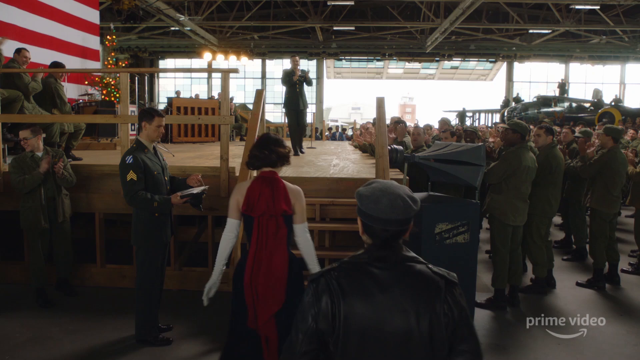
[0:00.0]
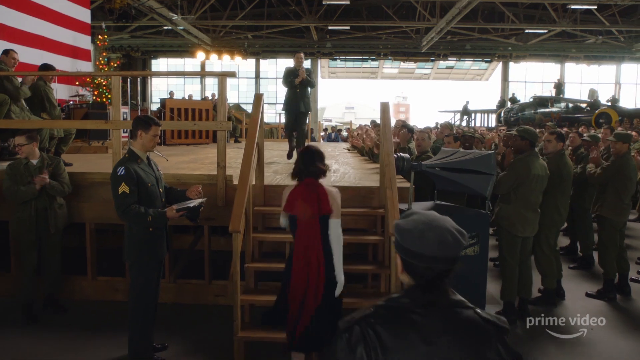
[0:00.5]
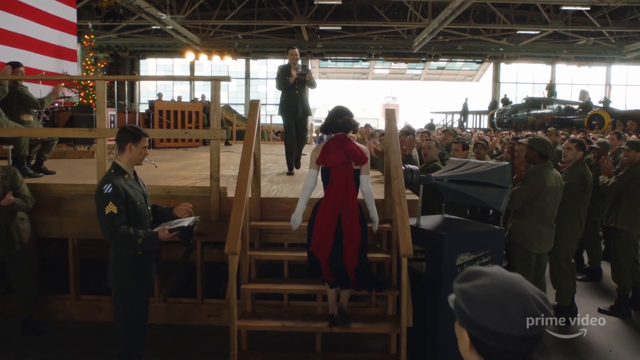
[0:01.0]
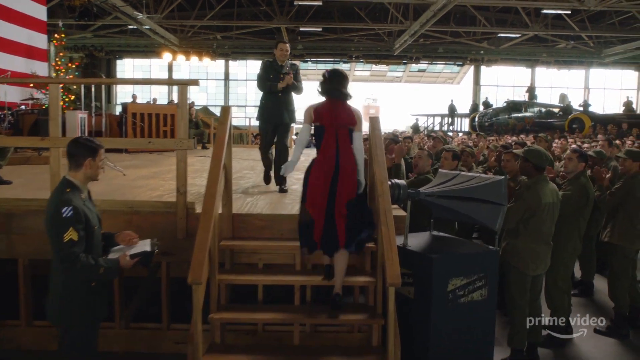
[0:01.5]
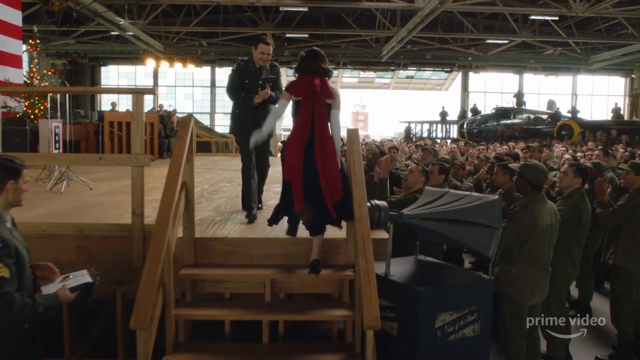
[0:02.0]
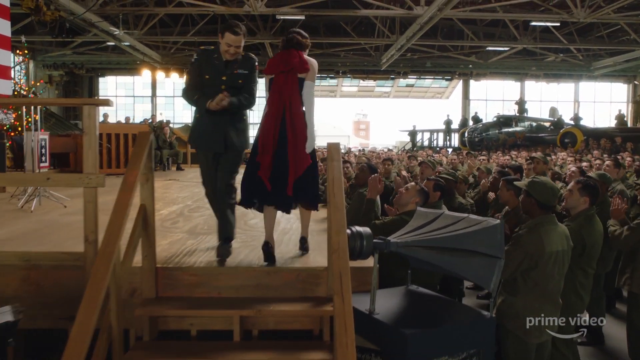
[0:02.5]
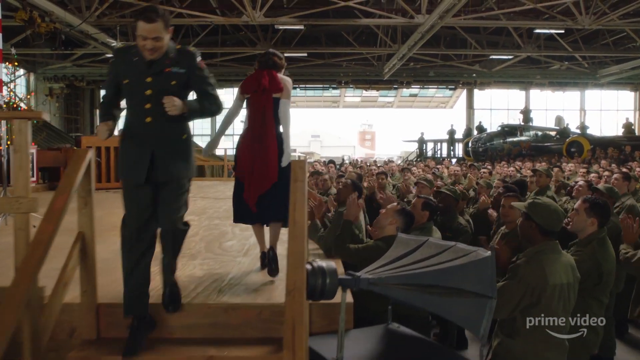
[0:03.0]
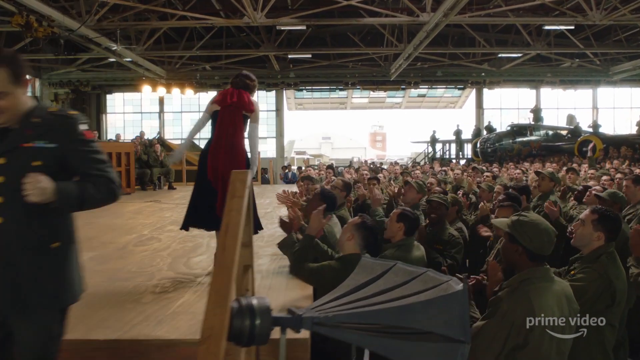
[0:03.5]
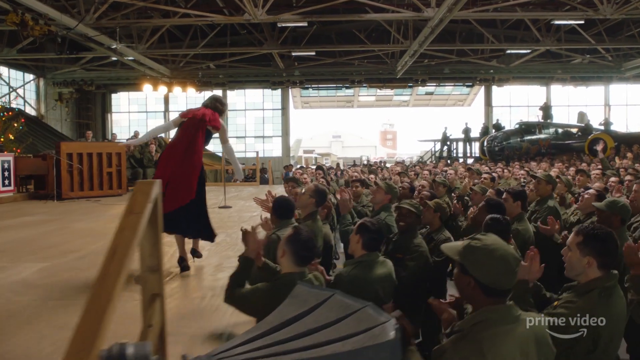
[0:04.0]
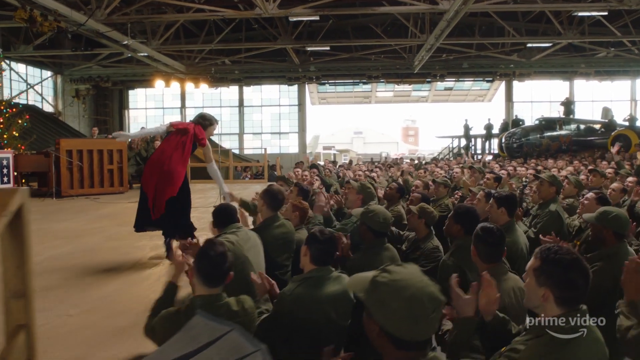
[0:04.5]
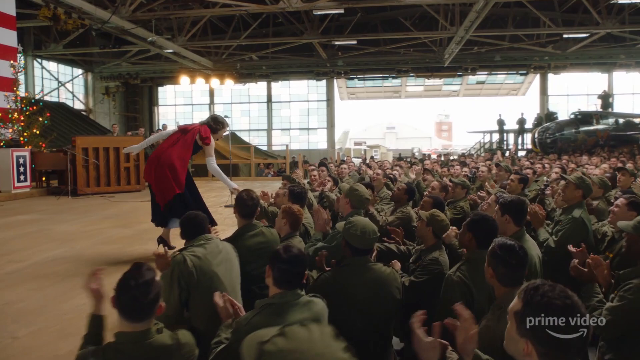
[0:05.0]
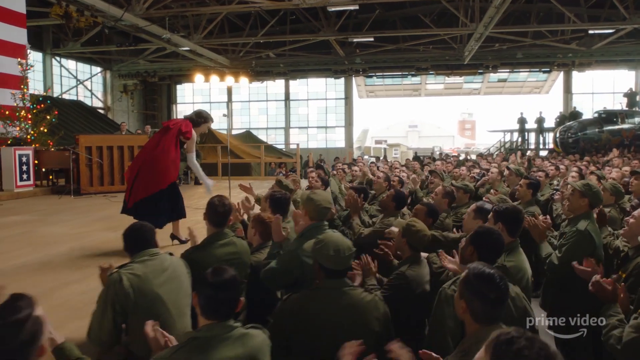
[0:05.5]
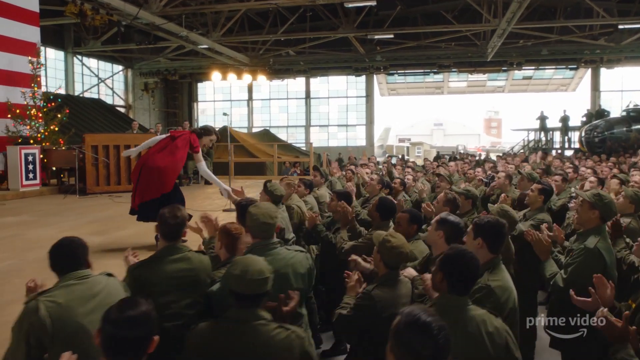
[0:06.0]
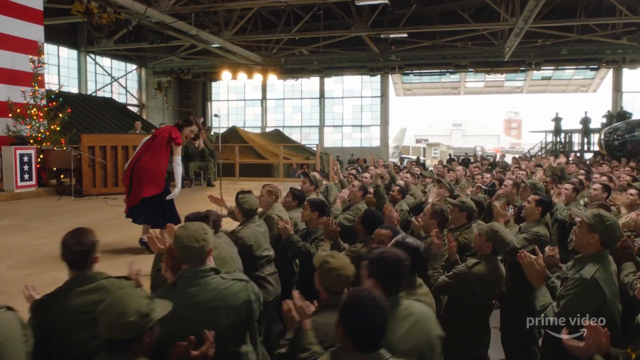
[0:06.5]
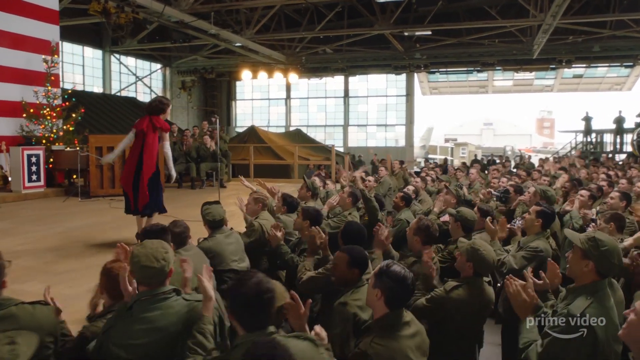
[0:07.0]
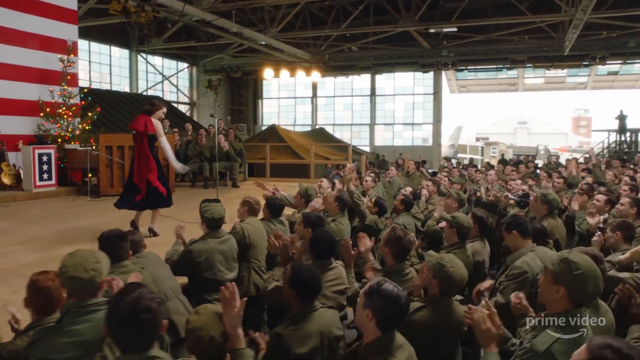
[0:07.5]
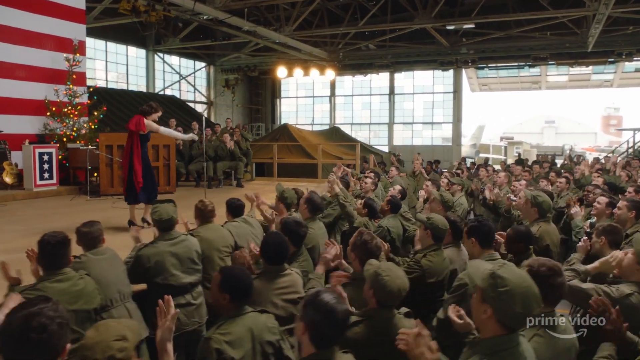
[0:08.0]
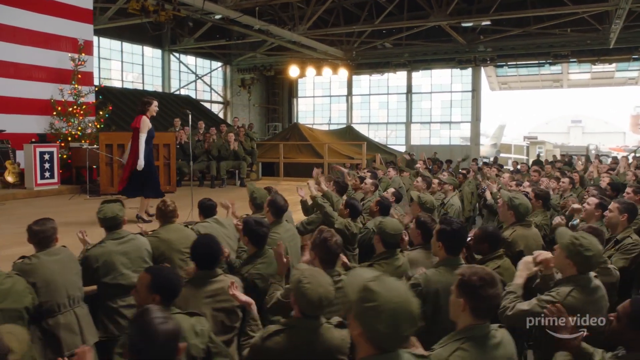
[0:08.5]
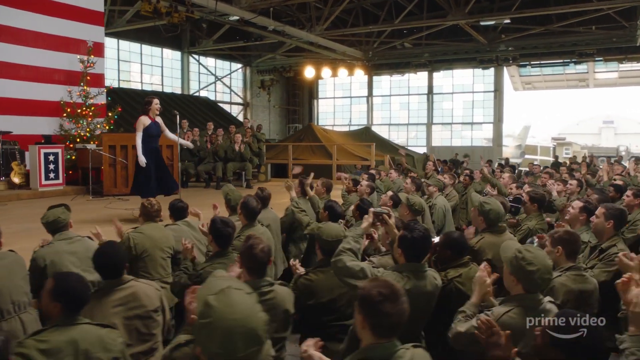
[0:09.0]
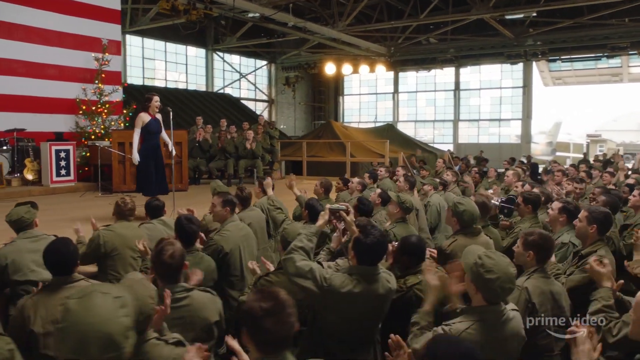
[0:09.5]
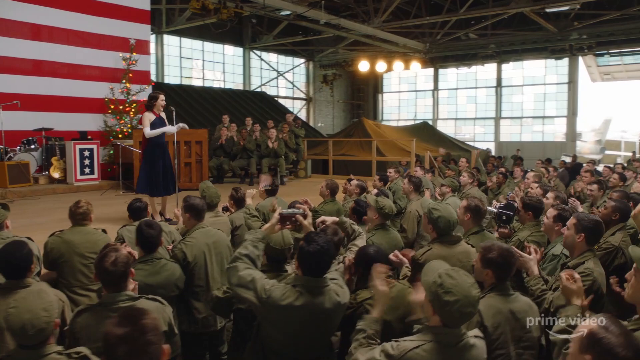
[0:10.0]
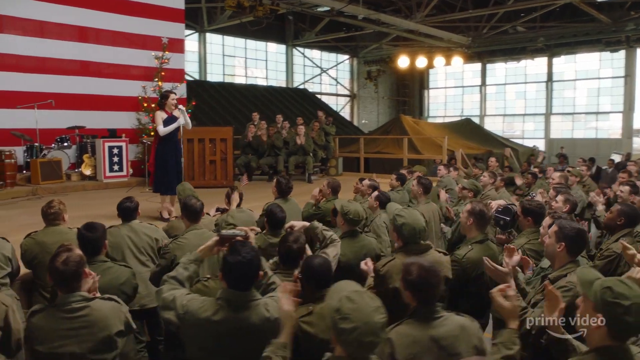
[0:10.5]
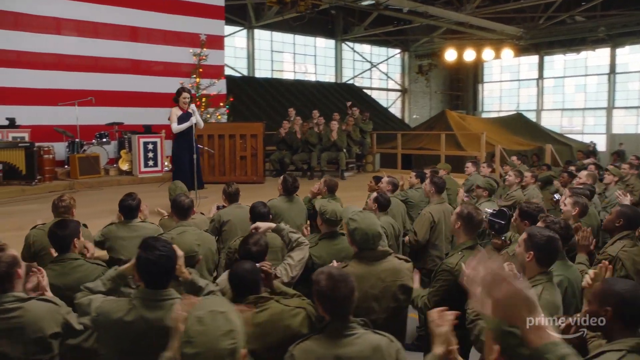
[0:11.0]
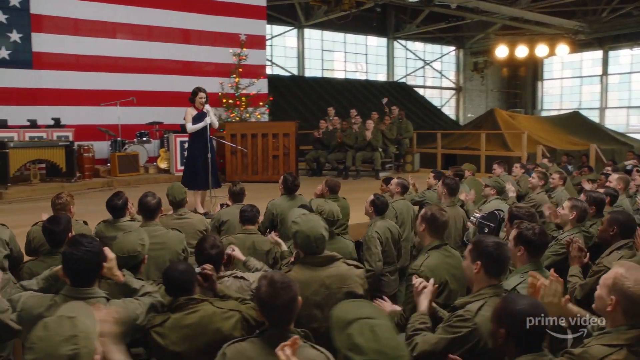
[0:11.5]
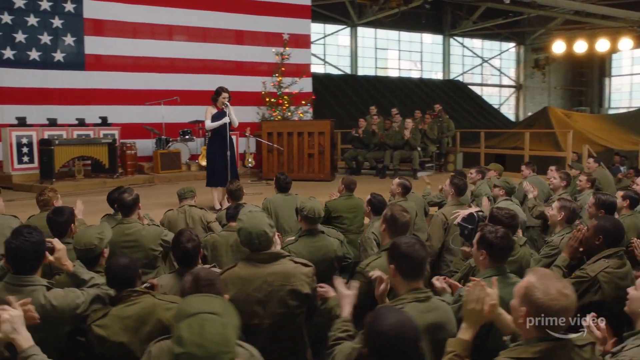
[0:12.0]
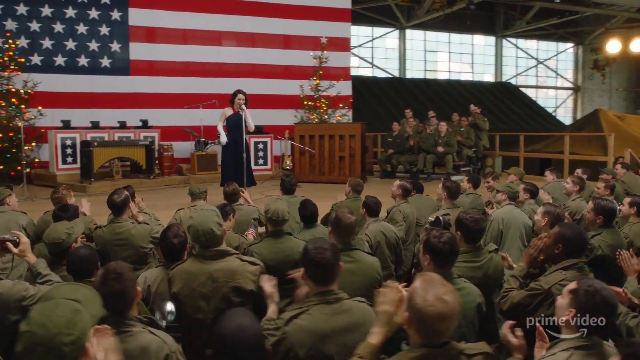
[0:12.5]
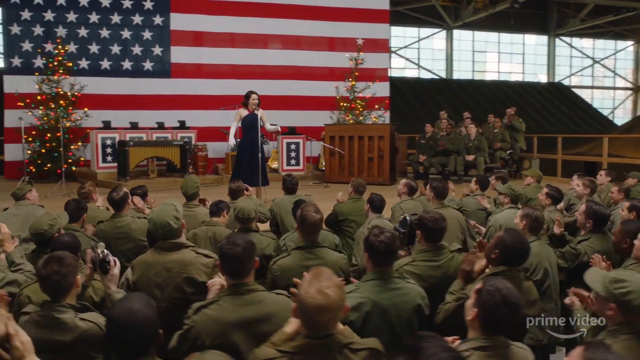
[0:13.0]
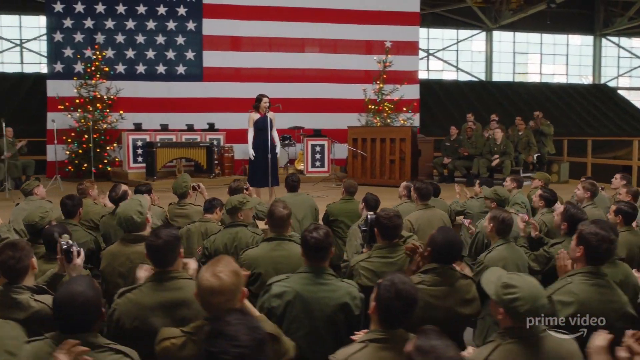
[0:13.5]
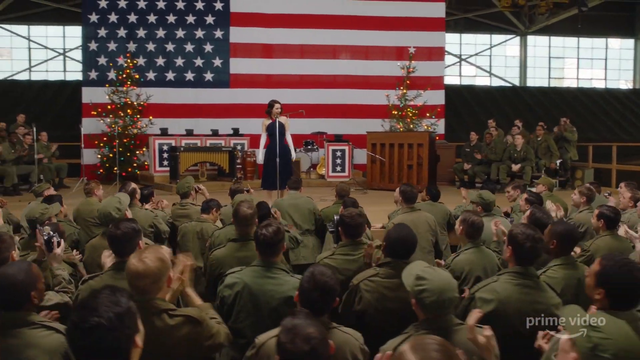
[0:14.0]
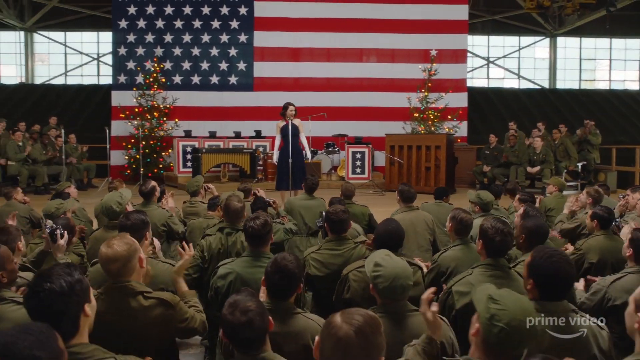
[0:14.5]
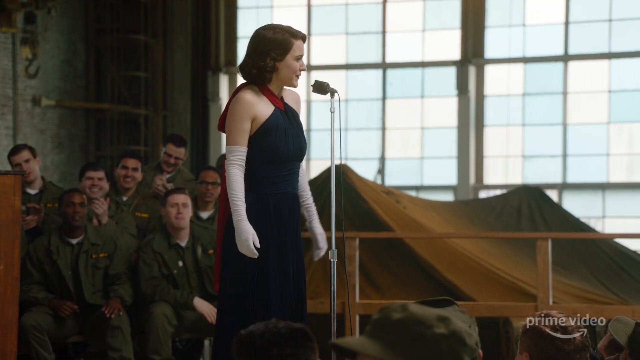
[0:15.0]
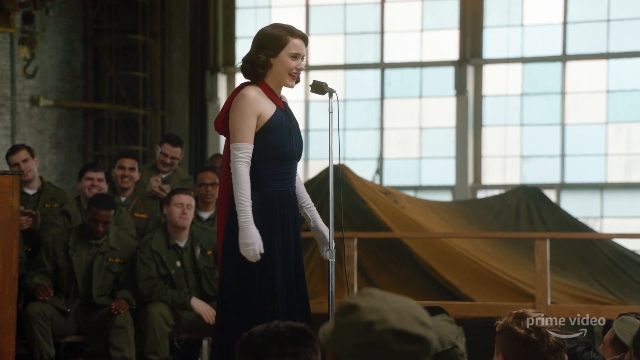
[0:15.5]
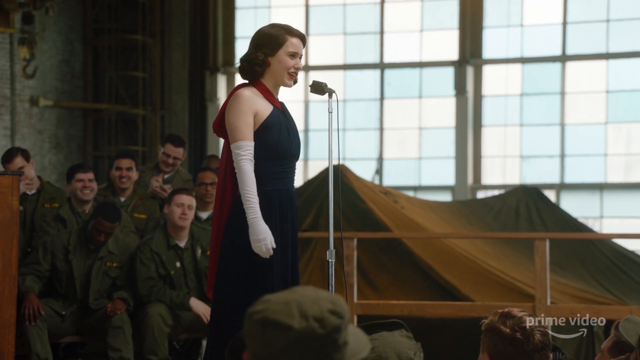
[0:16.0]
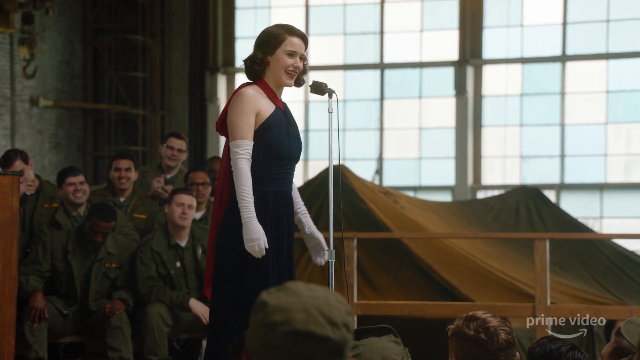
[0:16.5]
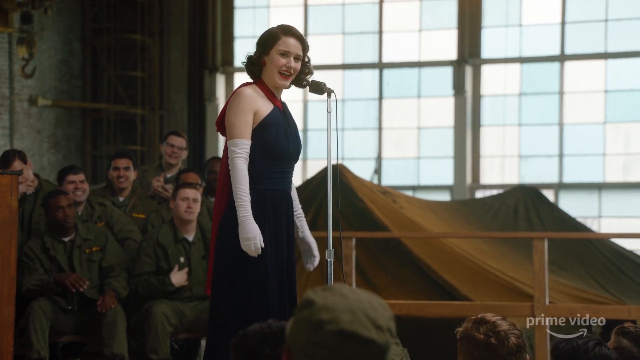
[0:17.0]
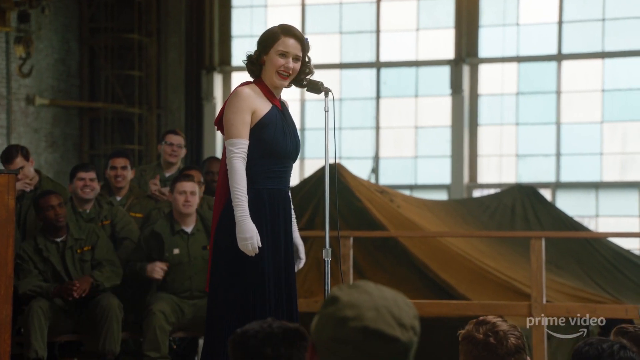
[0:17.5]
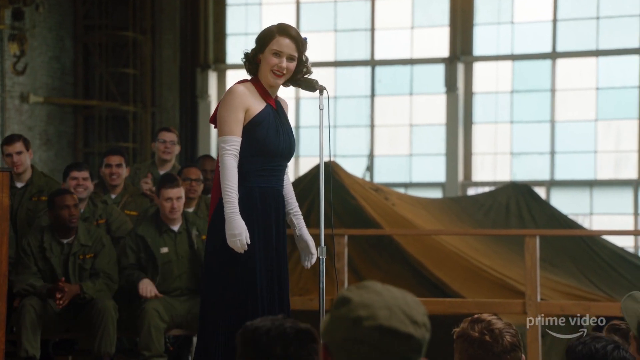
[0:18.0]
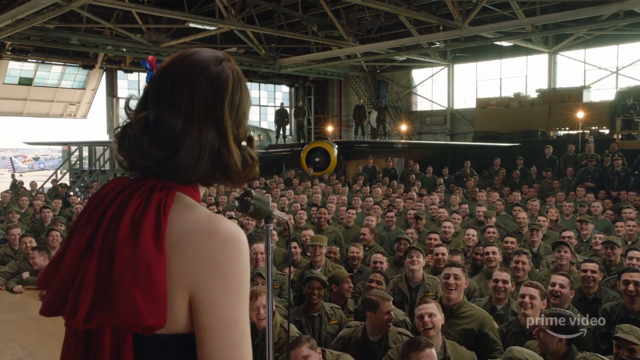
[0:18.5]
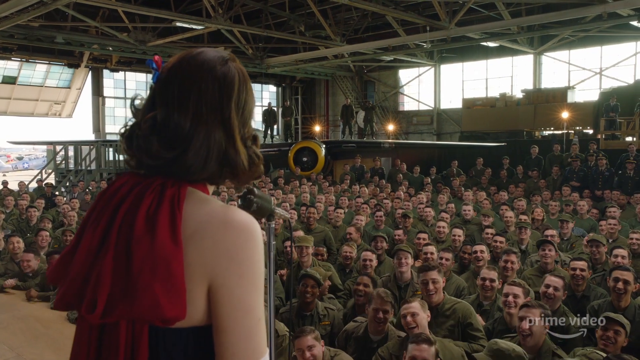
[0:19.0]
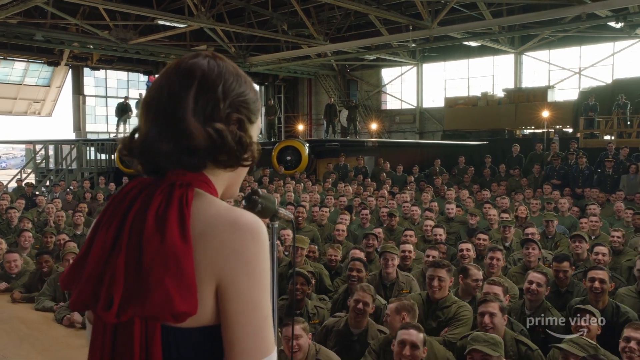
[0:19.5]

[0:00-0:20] Soldiers, all men, are gathered in a warehouse-like room that turns out to be a hangar converted into a stage. An emcee is on the stage, and a lady wearing red and white gloves climbs onto it. She is applauded as she appears and greets her fans. A US flag is in the background. She takes the mic and starts singing as the men, who are soldiers, cheer. Some are seated on top of the stage, while others stand on the airplanes in the hangar. At the back of the stage there is a flag and decorations like Christmas trees.